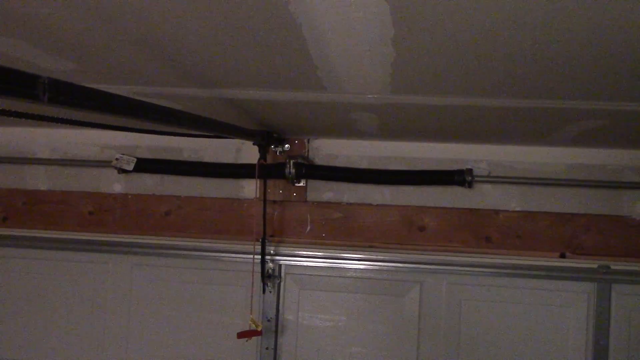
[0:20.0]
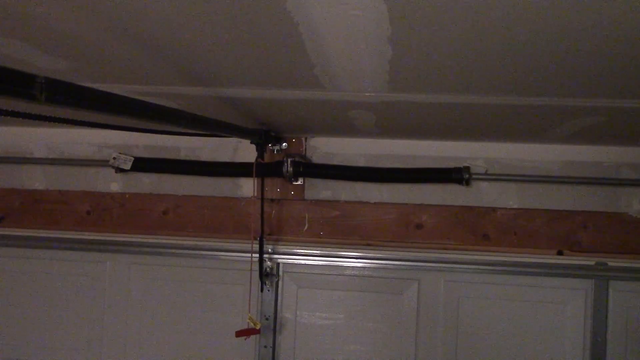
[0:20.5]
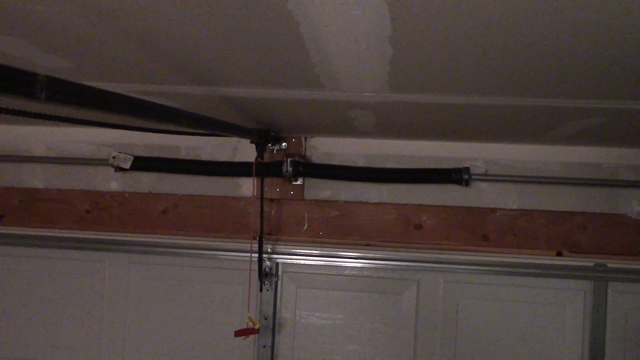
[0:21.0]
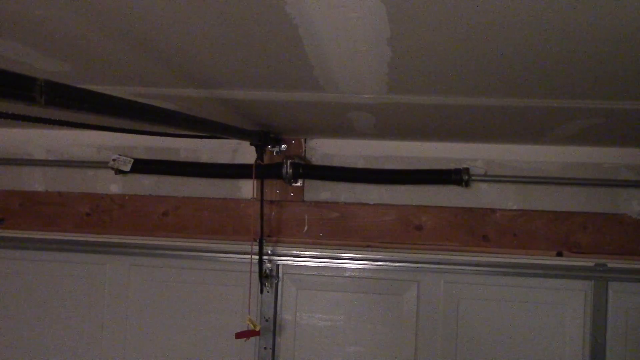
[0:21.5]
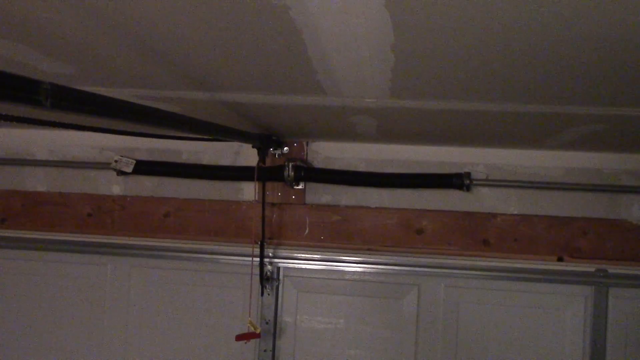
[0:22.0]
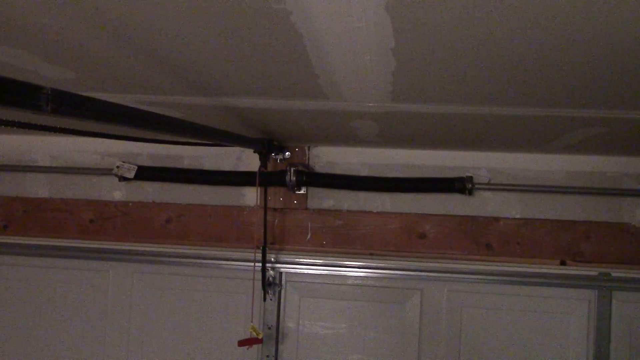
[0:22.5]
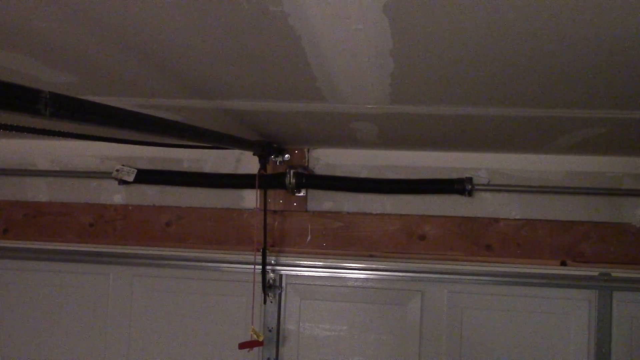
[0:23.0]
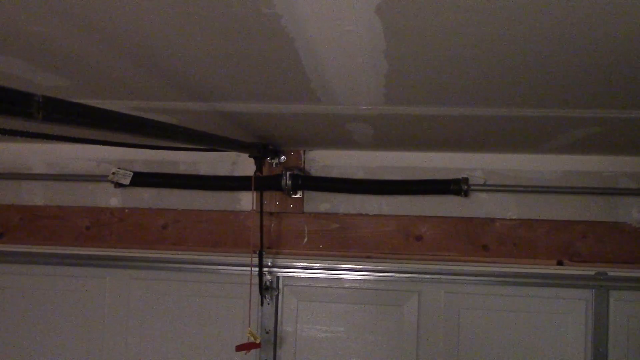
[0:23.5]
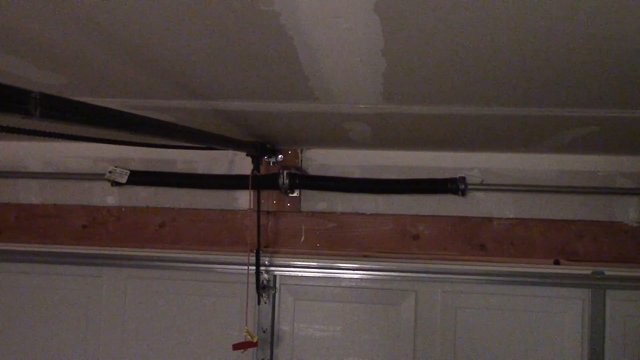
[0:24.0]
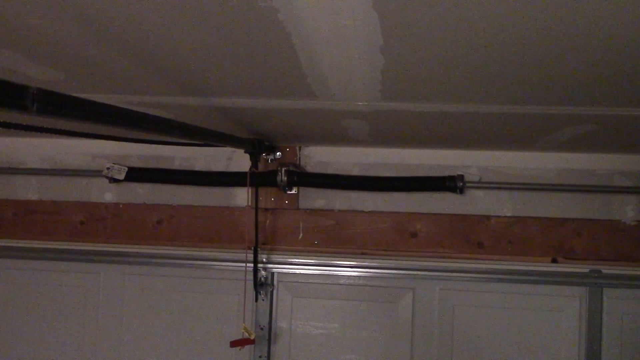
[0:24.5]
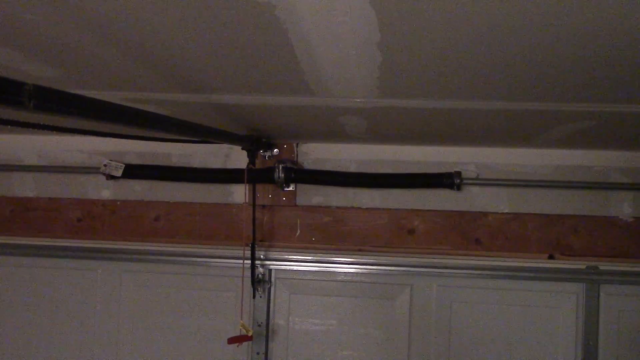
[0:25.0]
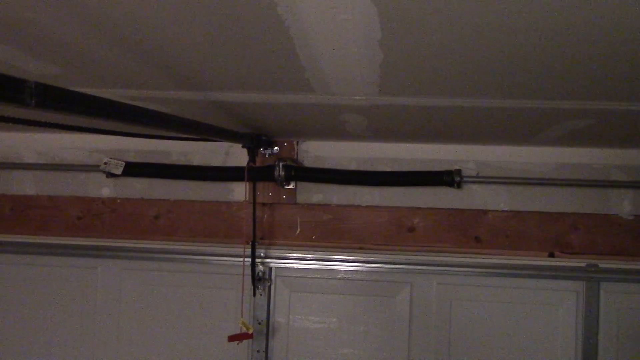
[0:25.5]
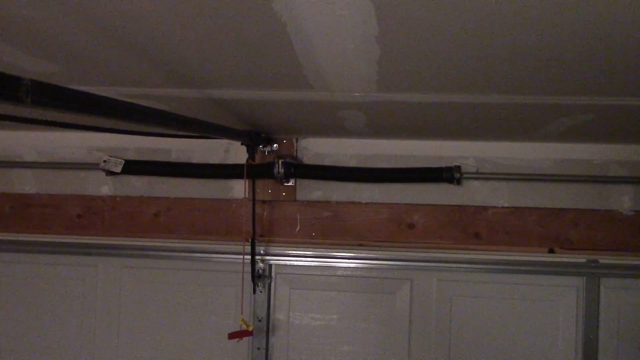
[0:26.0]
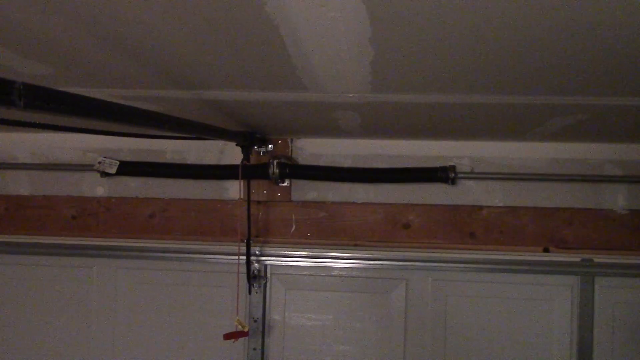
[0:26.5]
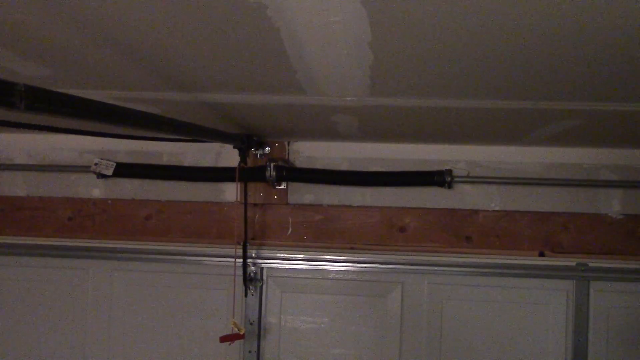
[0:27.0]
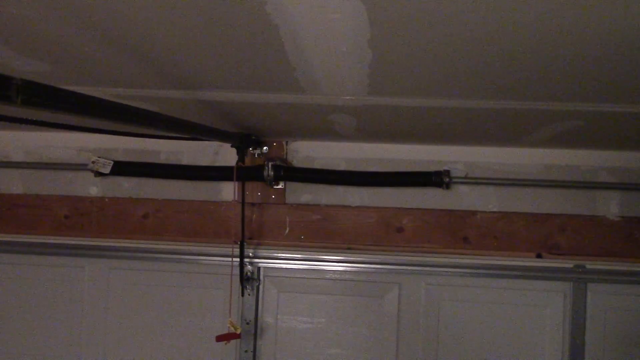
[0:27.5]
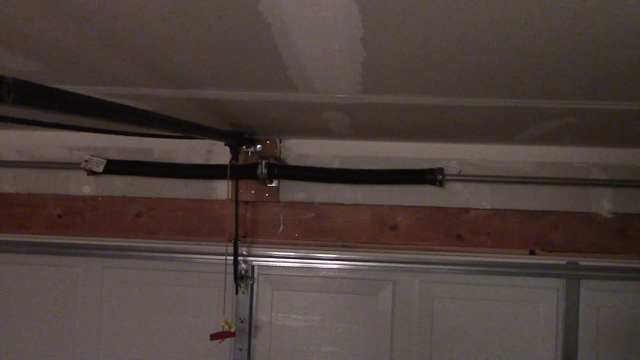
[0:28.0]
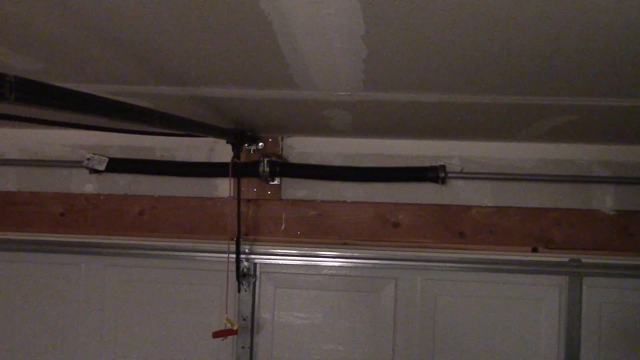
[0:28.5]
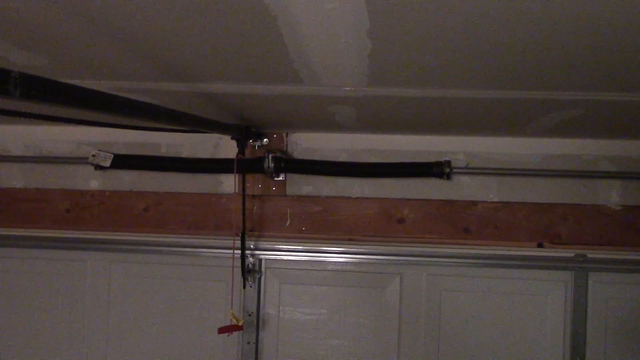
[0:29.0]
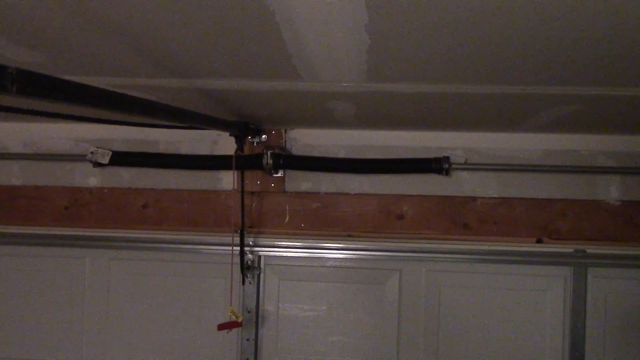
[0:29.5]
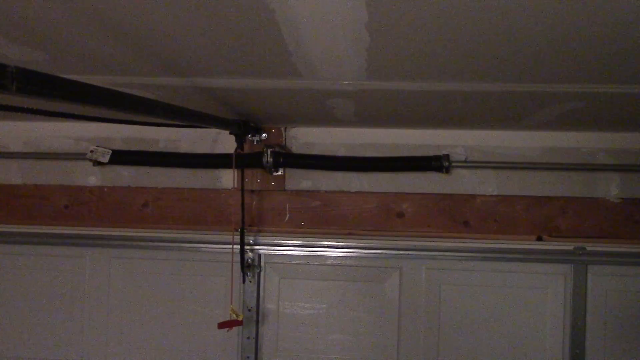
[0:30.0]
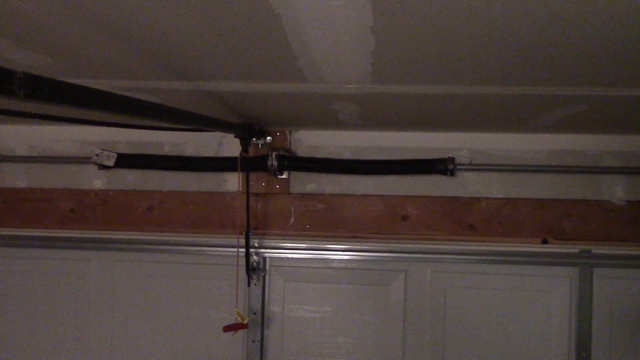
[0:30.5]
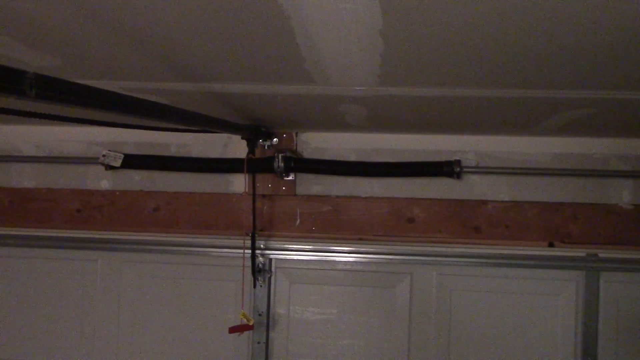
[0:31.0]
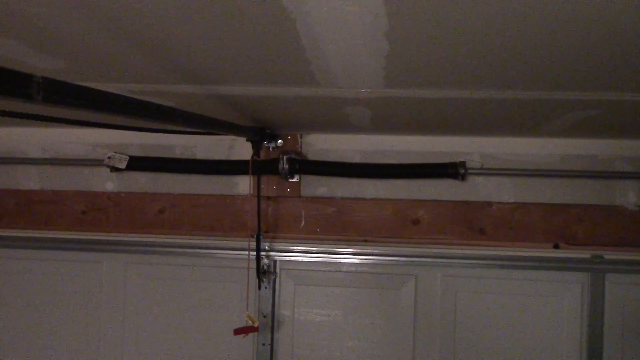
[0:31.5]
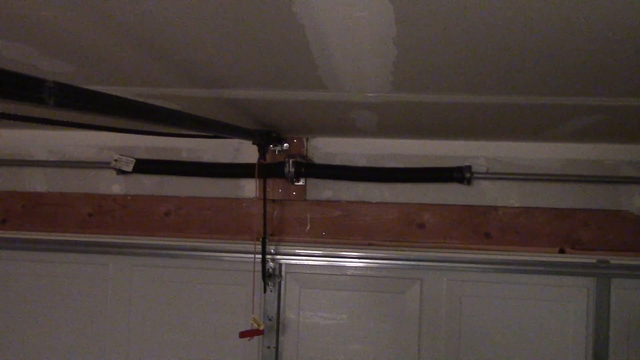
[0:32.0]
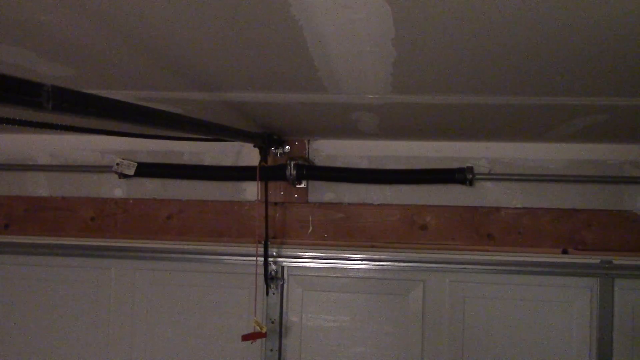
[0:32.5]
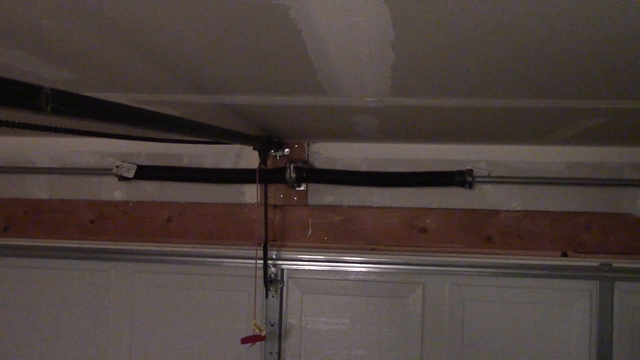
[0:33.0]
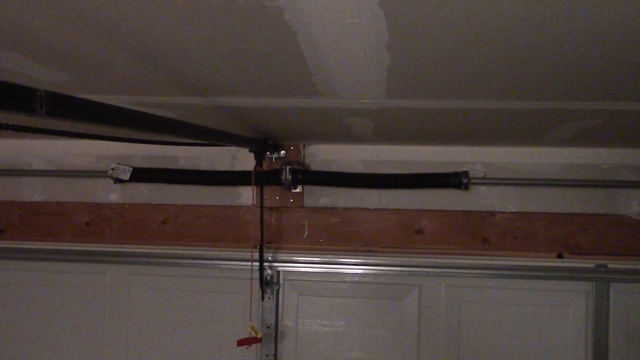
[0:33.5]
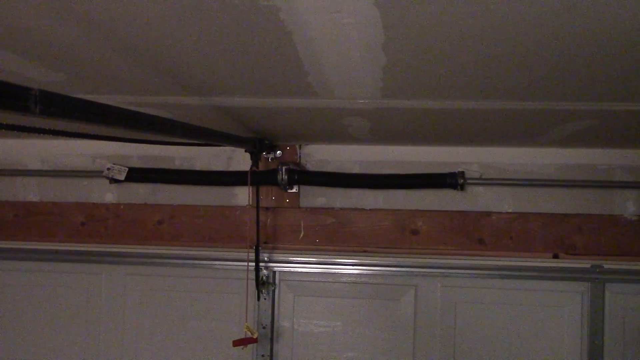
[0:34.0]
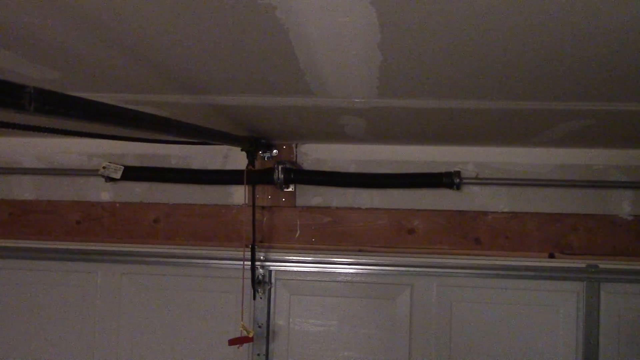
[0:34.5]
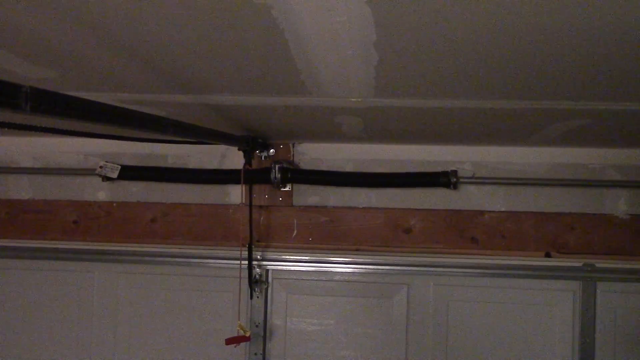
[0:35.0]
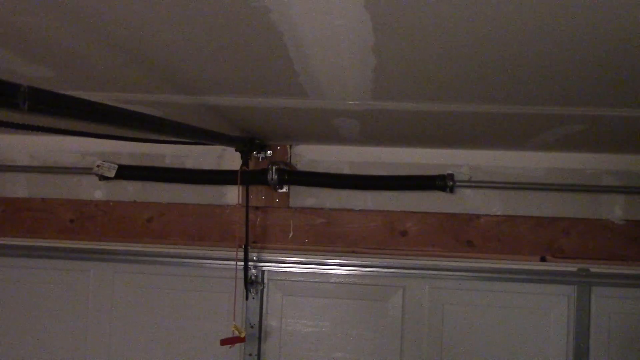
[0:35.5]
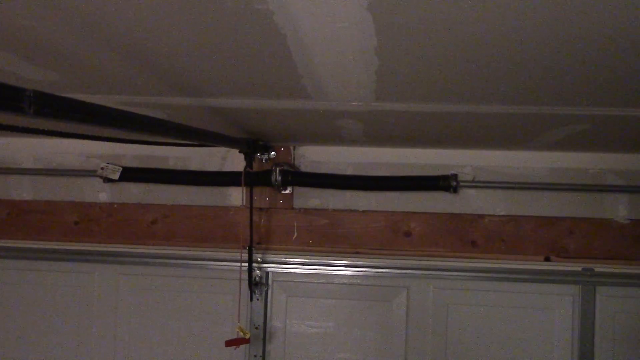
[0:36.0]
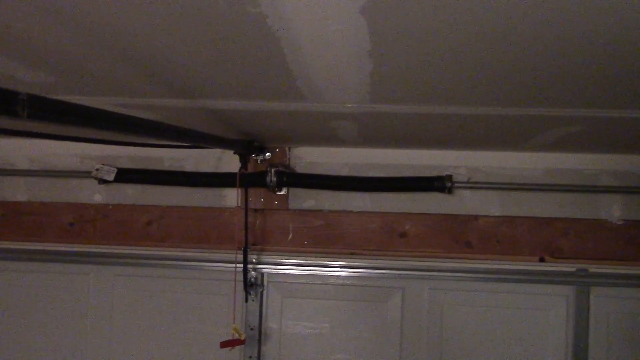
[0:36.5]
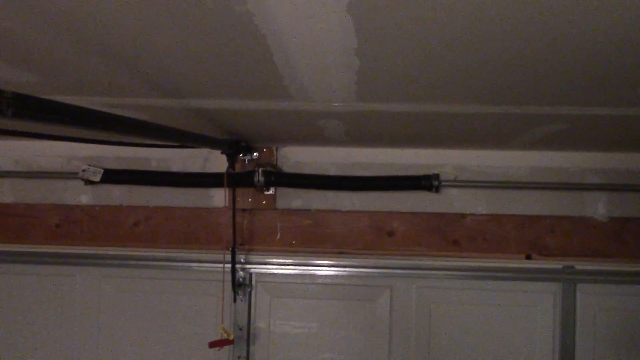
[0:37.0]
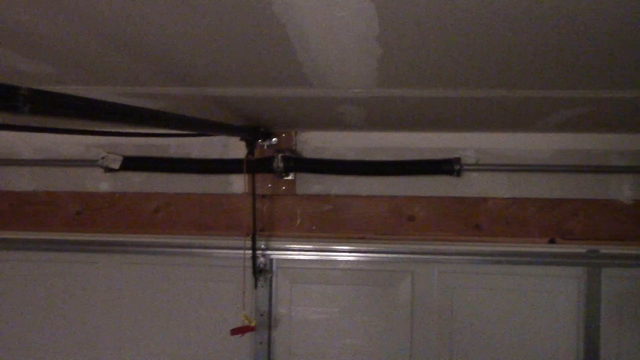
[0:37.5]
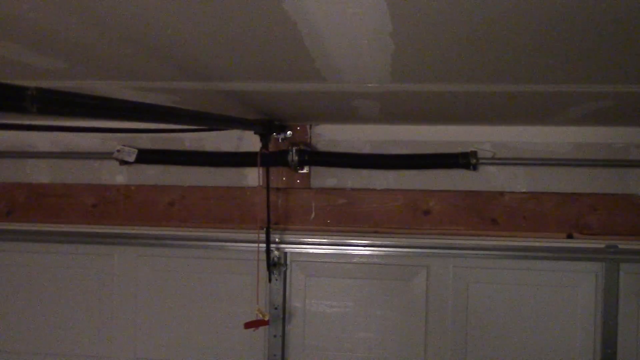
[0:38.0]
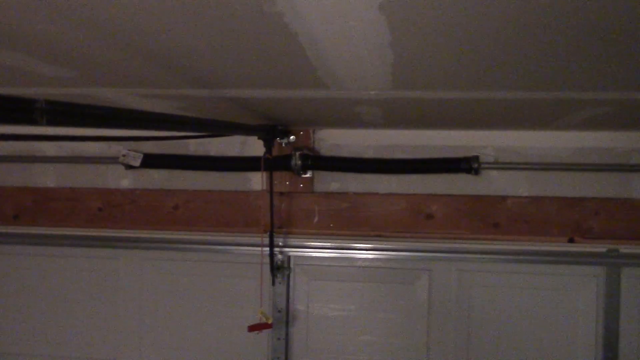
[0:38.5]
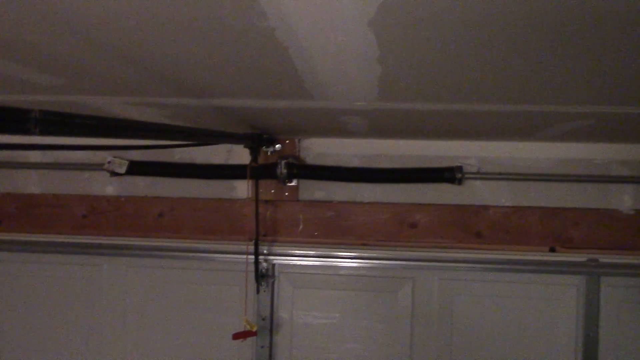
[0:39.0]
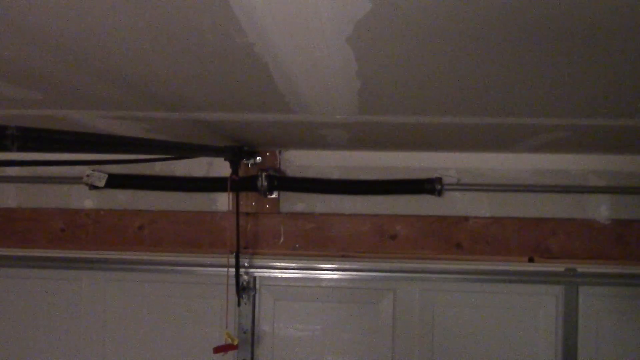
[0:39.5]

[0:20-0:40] The view stays on the ceiling inside the garage and the garage door opener. A little of the garage door and a little of the ceiling are visible. The garage door is white and looks to be a single-car door. The ceiling is kind of a beige color, with white paint on the seams where the drywall sheets meet, so the garage looks very unfinished and plain. The camera is a little shaky and not mounted; it looks like someone is holding it. Nothing moves in the shot except the person holding the camera.